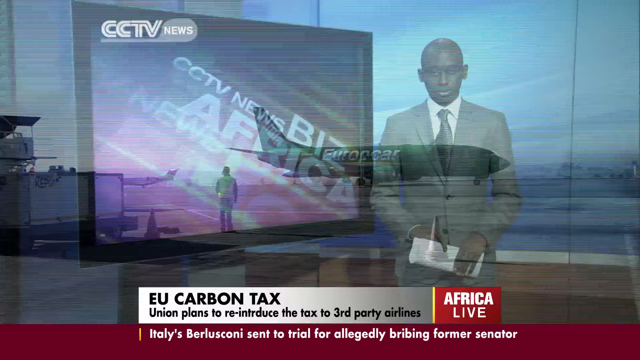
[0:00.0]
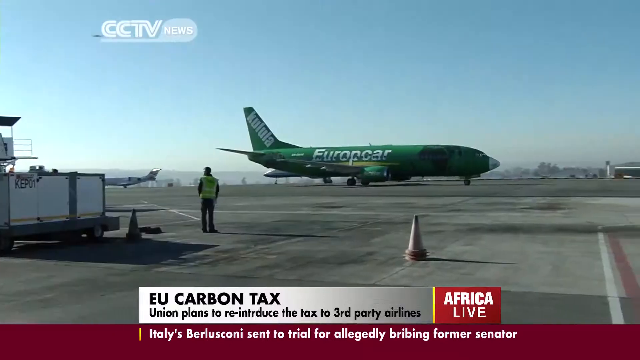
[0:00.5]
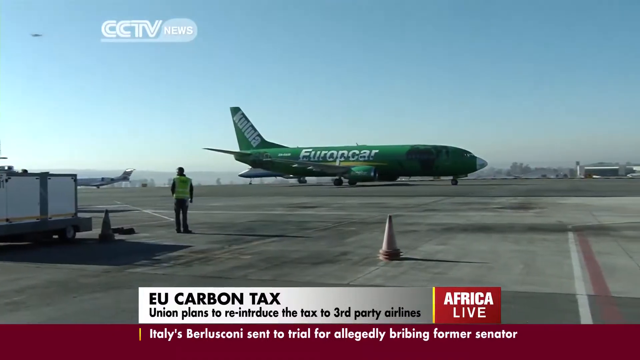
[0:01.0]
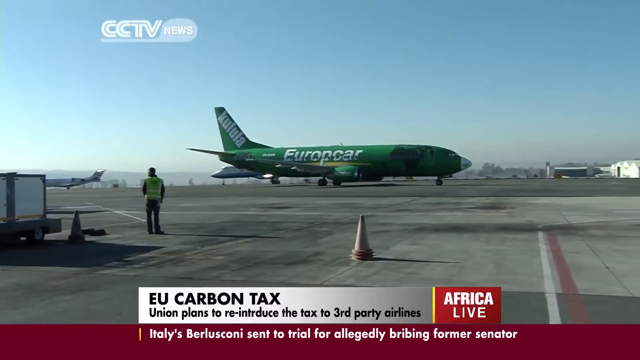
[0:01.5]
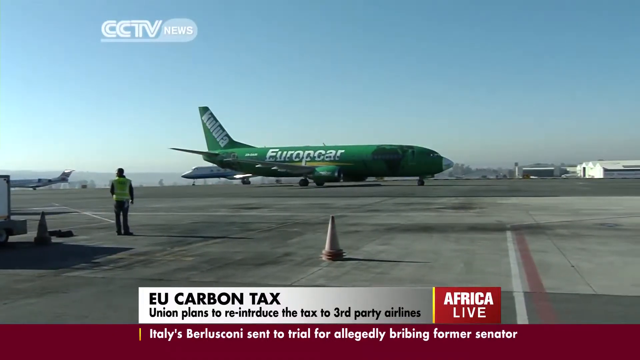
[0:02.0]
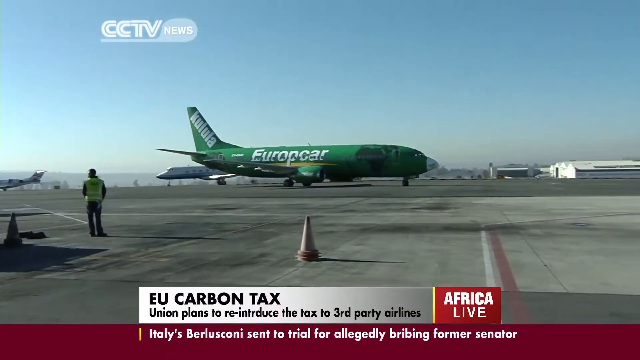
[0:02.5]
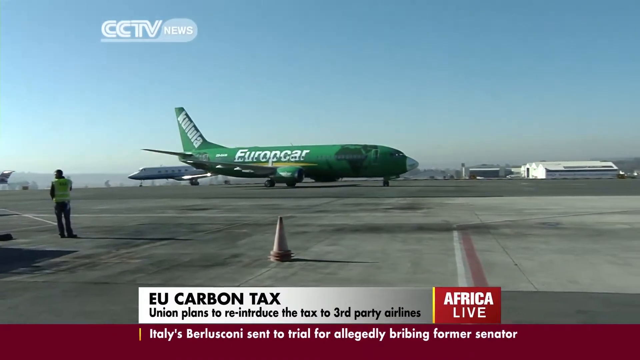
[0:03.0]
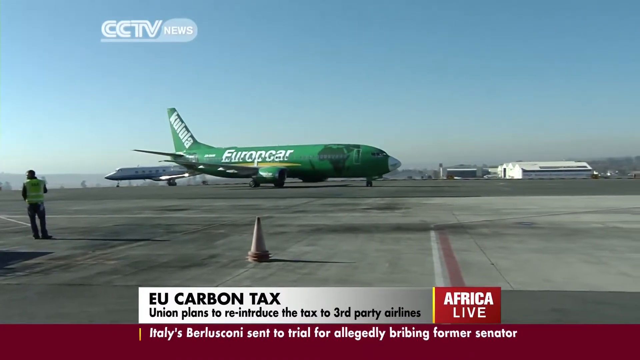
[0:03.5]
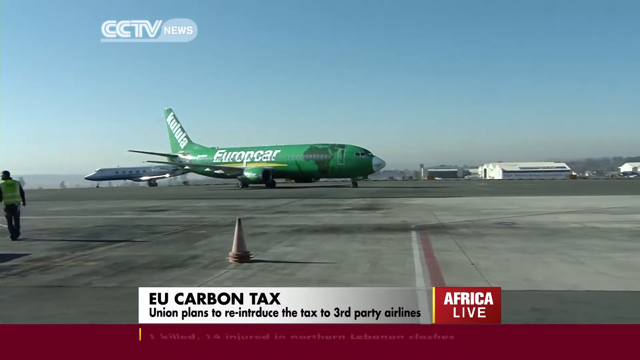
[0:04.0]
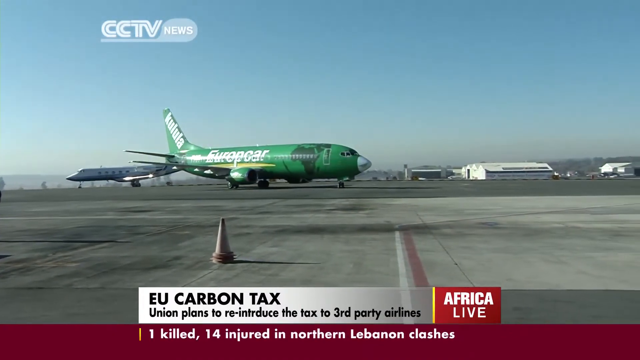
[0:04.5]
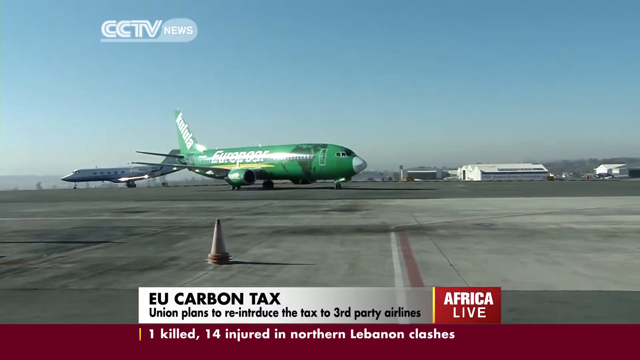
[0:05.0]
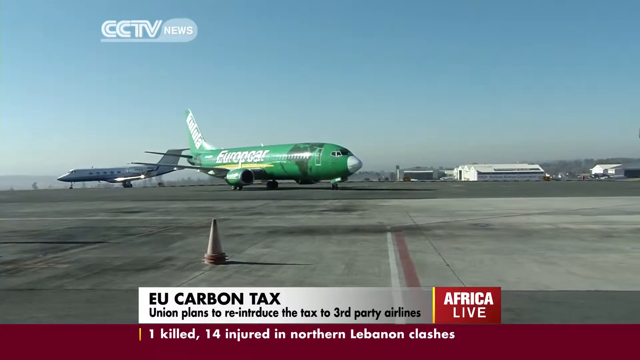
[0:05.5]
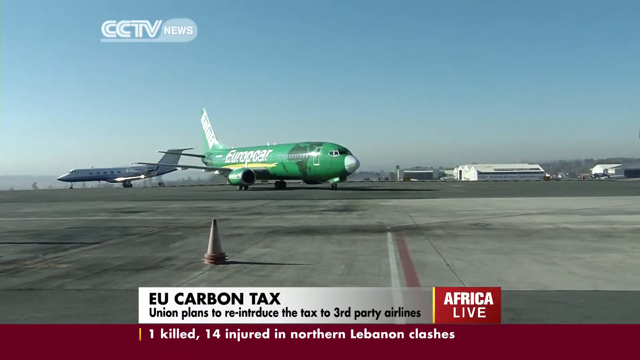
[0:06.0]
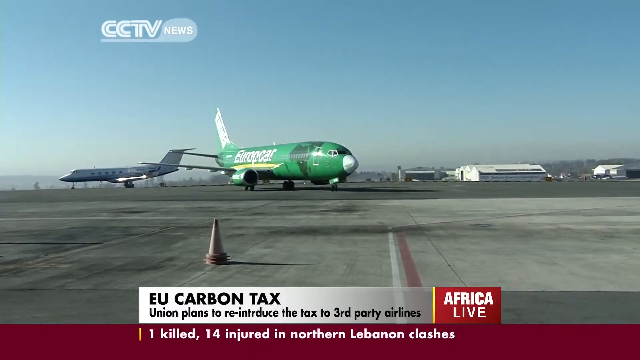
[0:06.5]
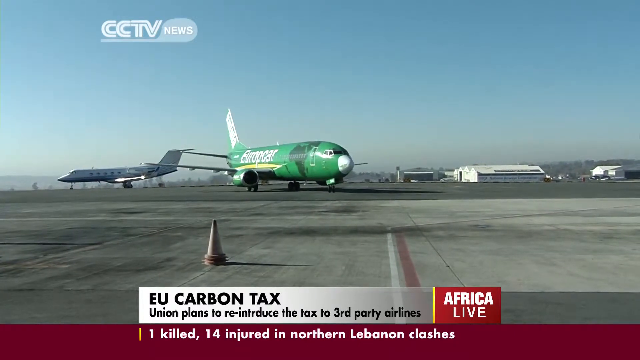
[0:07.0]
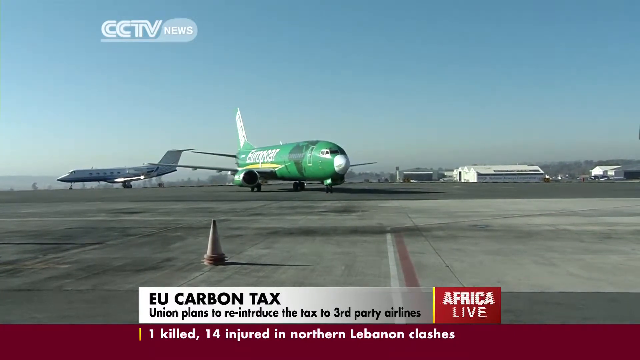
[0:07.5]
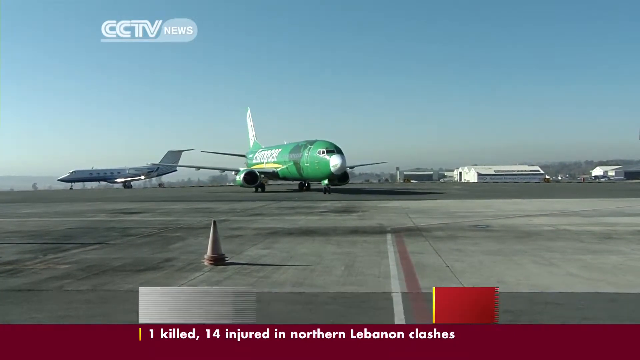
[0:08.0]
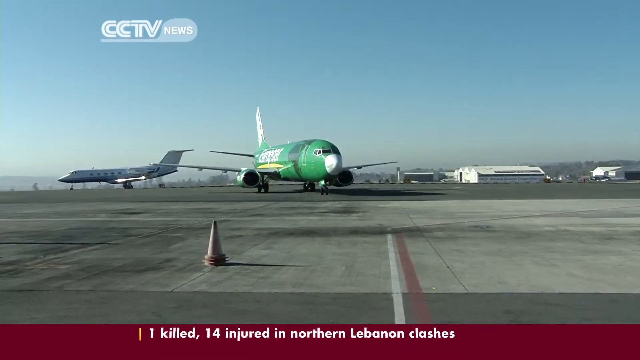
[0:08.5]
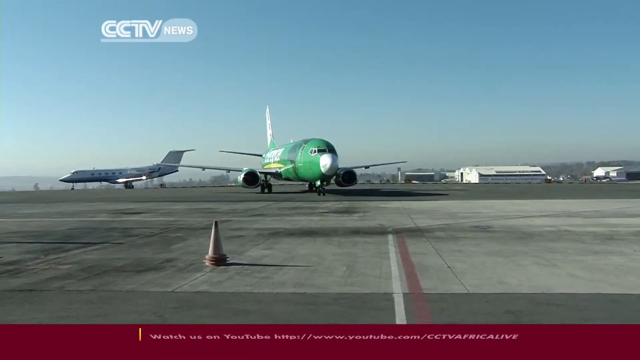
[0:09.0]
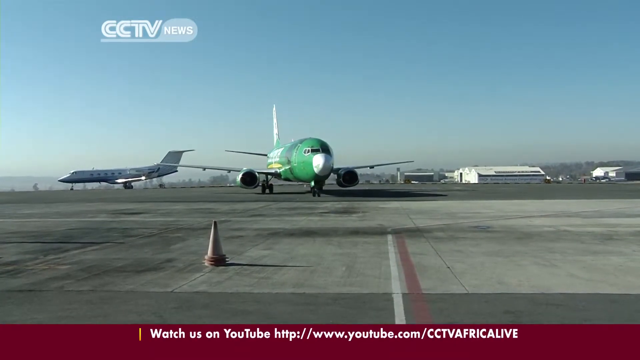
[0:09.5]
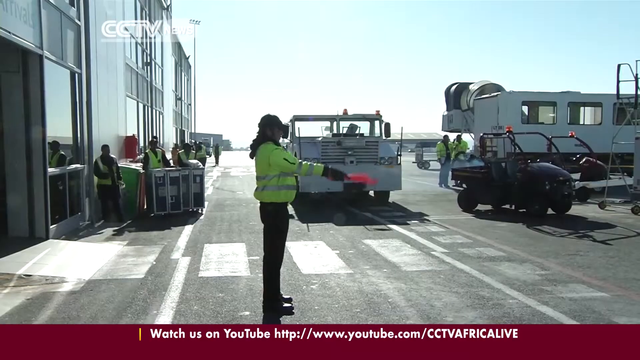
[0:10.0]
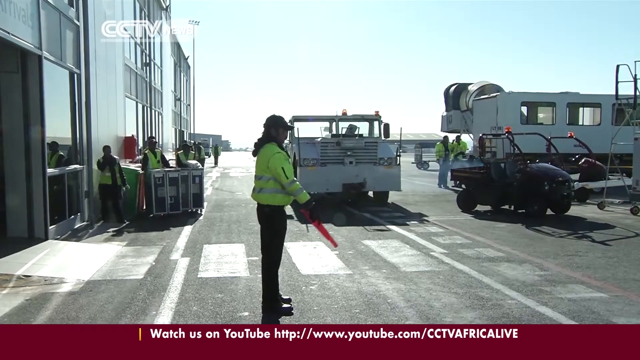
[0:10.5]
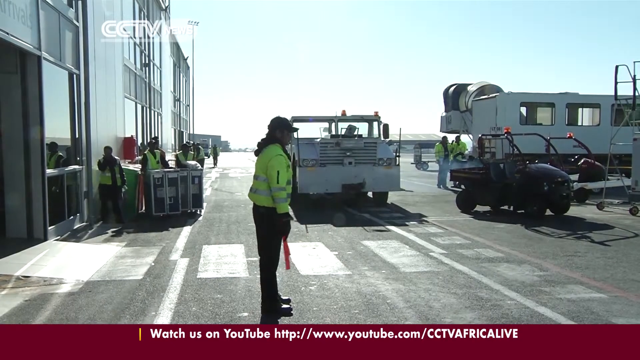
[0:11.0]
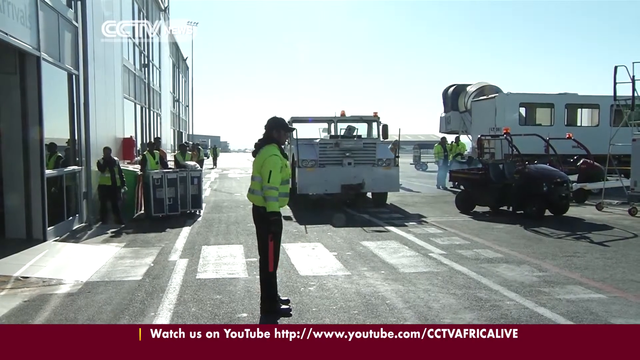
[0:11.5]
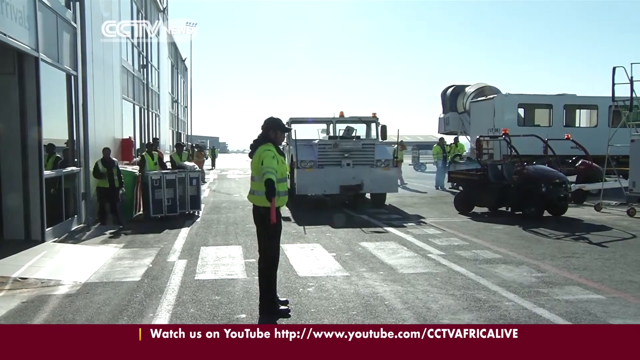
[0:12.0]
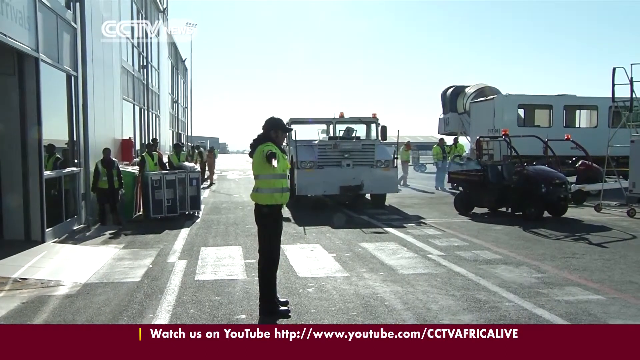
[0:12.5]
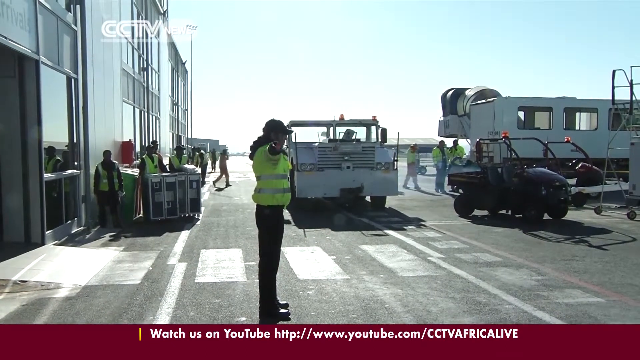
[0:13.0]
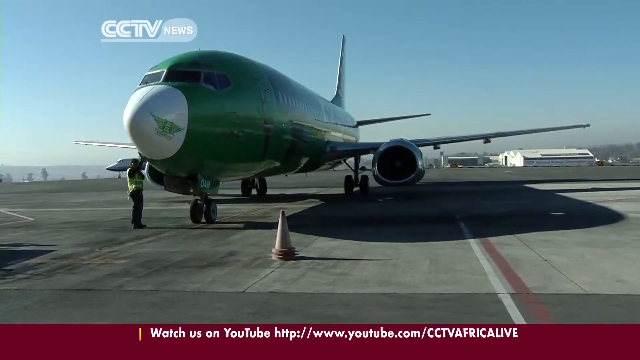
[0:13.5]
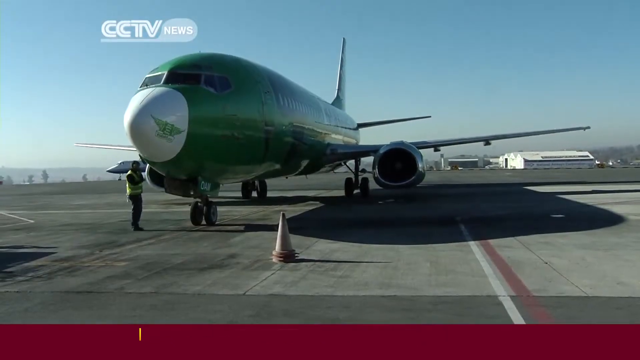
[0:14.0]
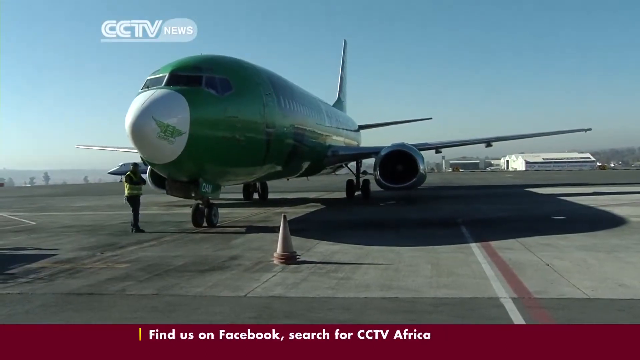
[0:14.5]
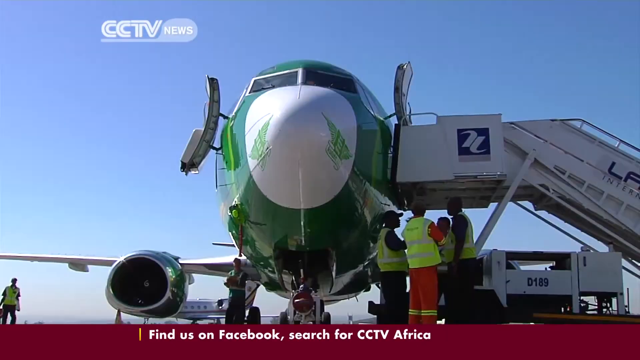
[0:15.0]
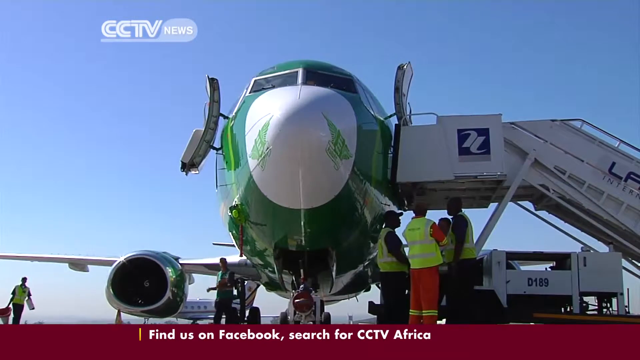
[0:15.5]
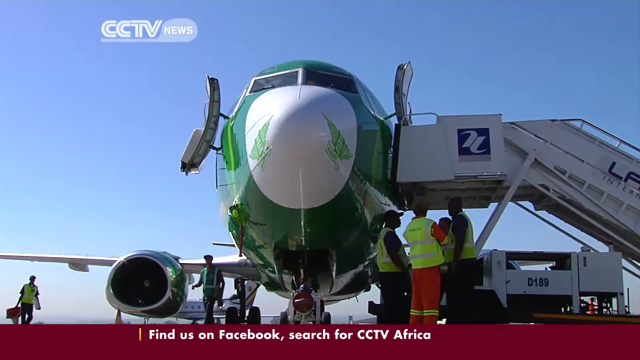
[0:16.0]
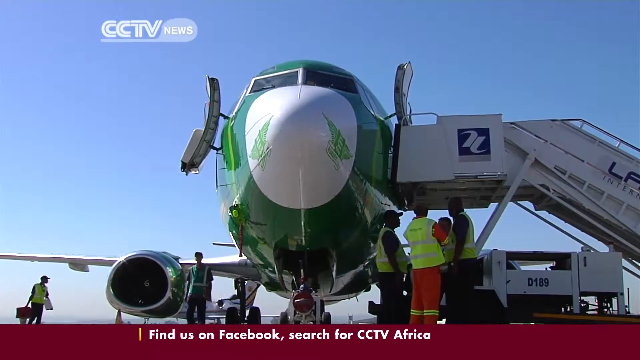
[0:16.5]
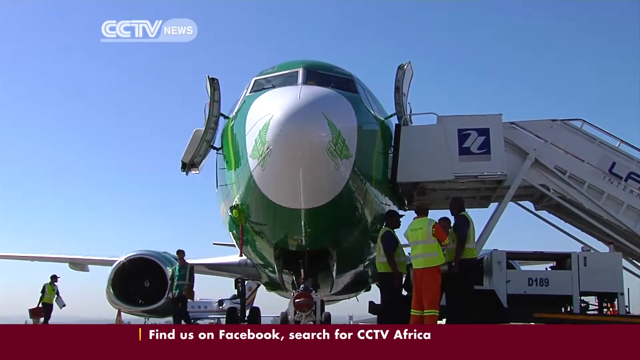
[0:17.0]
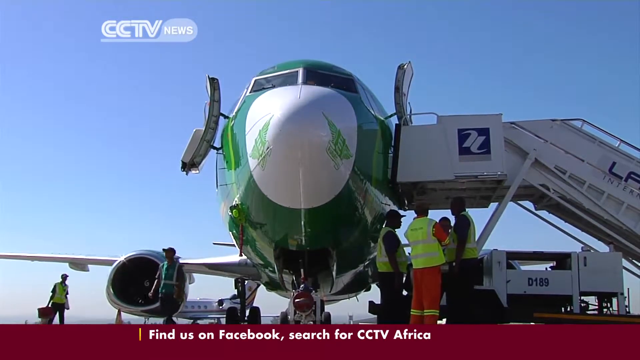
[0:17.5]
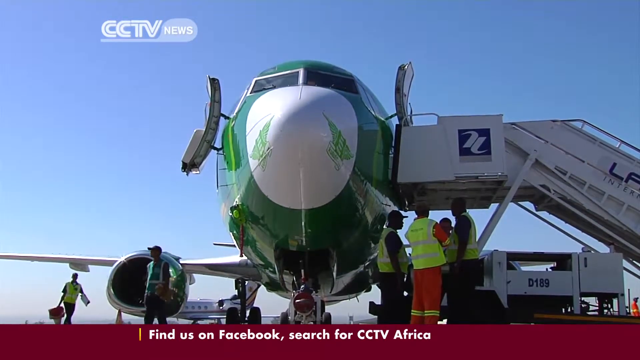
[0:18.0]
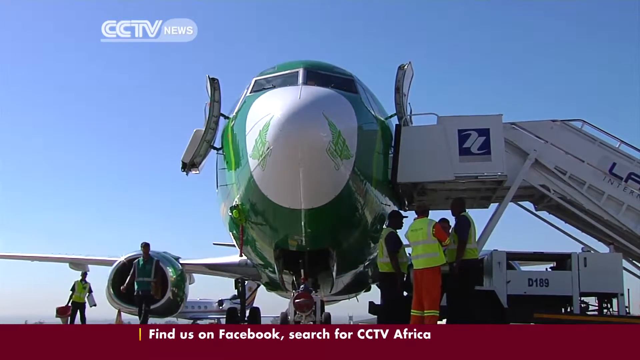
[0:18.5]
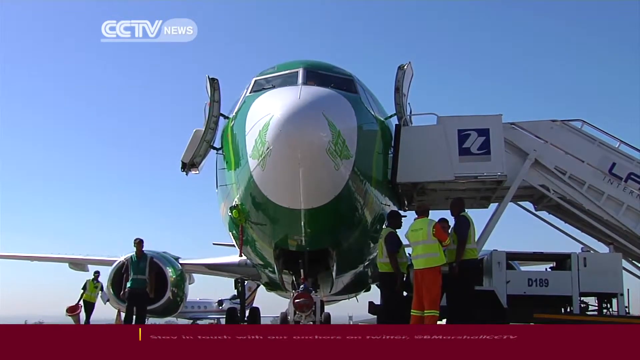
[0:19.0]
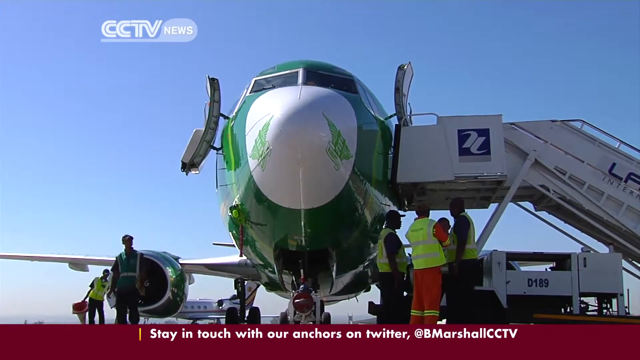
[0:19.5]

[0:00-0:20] A newscaster stands on screen; he has short black hair, is of average height, and wears a gray suit. Beneath him, a white box with bold black lettering reads "EU carbon tax", and under that is the line "Union plans to reintroduce the tax to third-party airlines". The news is coming from Africa Live. Next, a Europcar airplane appears. It is all green with a white nose, and its tail is also a forest green with white lettering. The plane comes up to the gate, where a woman with flags directs it into its parking spot. The Europcar then sits parked at the gate, ready to disembark.